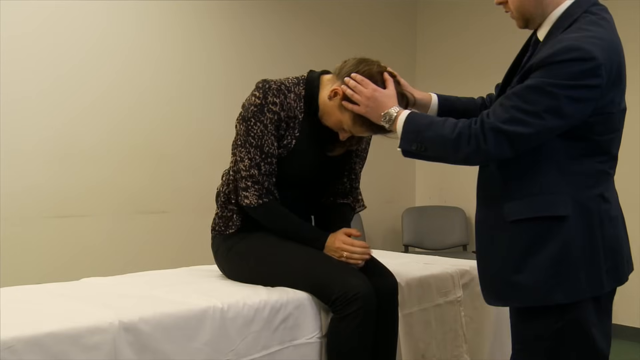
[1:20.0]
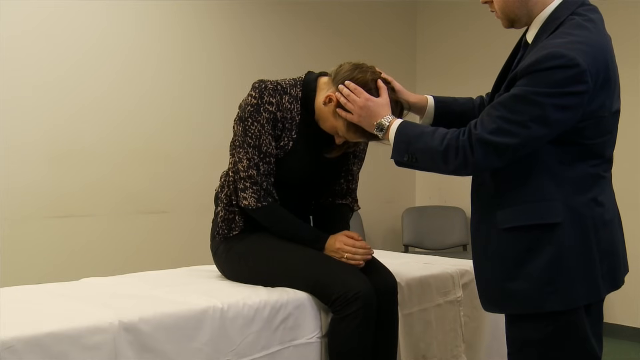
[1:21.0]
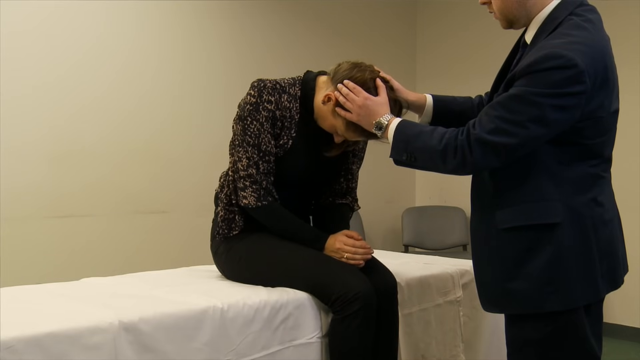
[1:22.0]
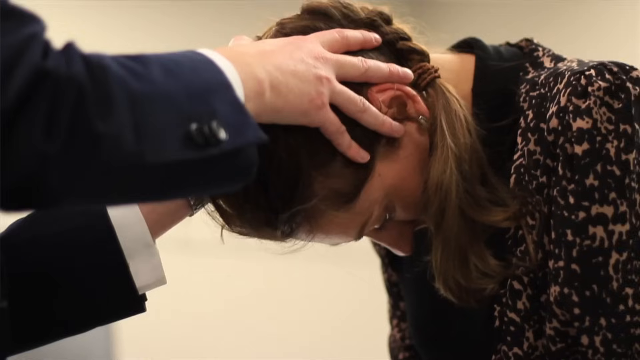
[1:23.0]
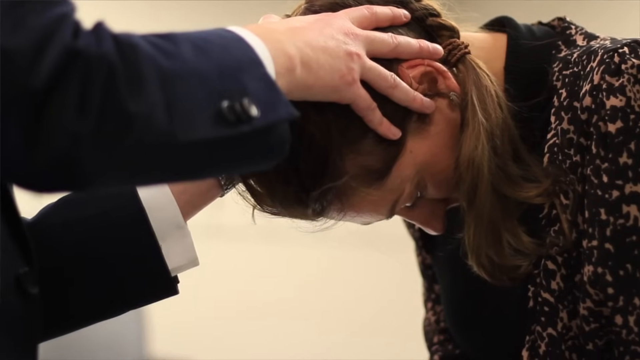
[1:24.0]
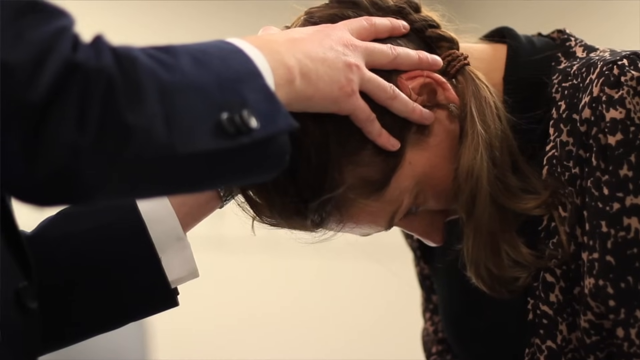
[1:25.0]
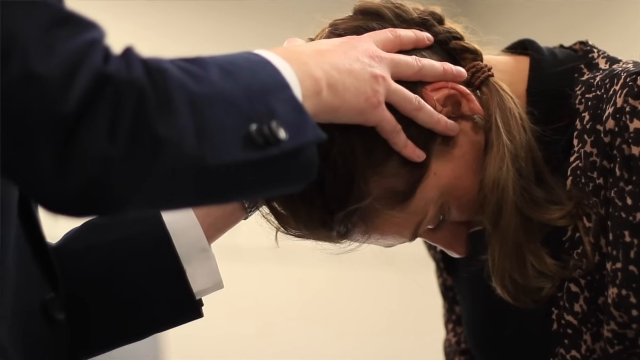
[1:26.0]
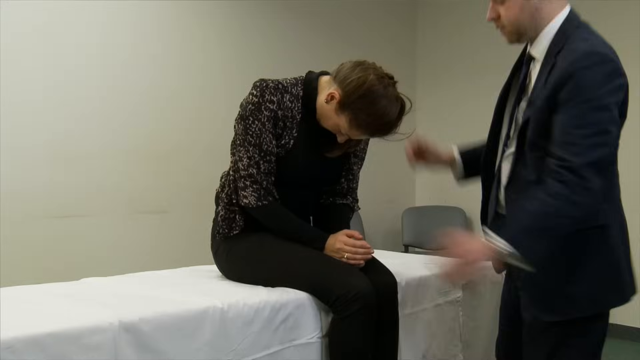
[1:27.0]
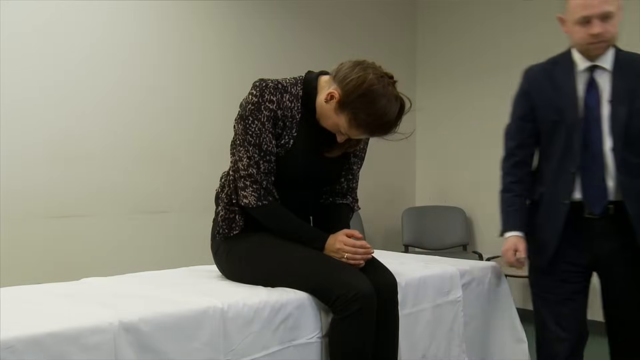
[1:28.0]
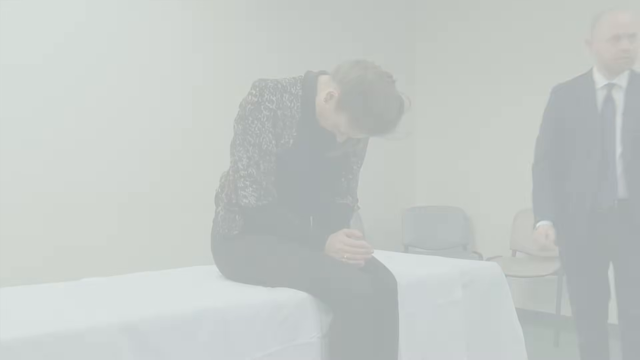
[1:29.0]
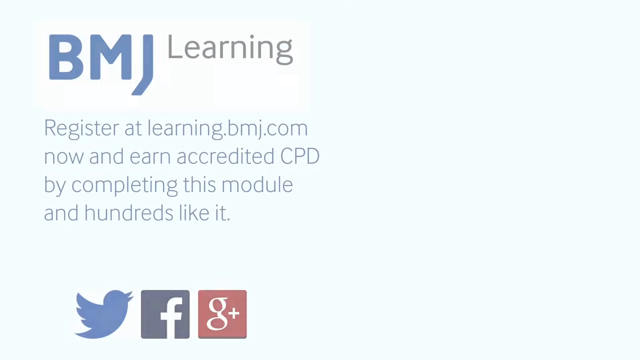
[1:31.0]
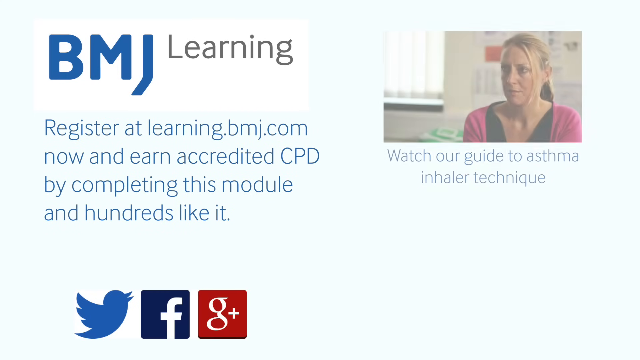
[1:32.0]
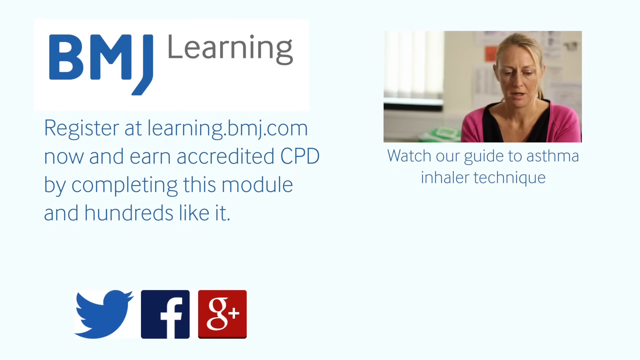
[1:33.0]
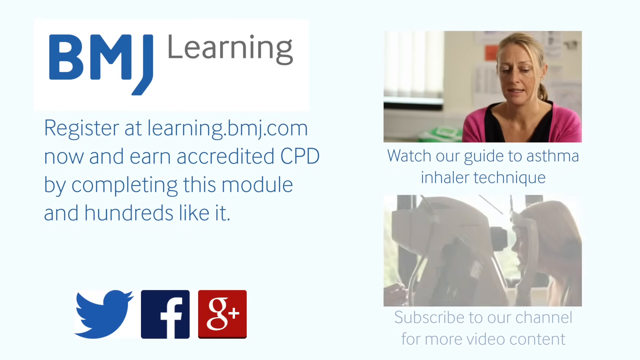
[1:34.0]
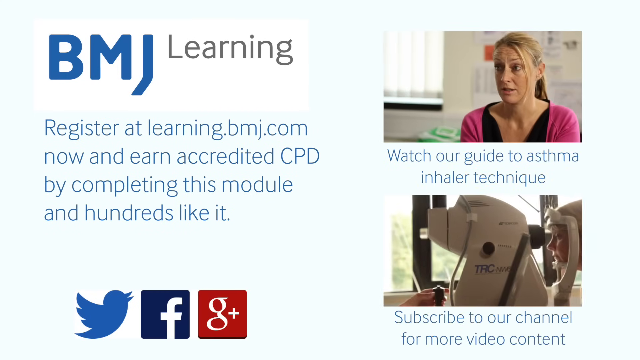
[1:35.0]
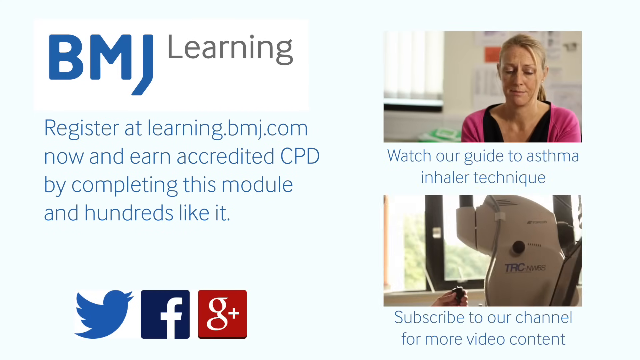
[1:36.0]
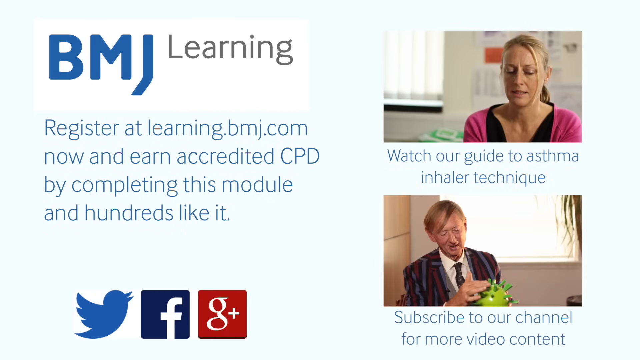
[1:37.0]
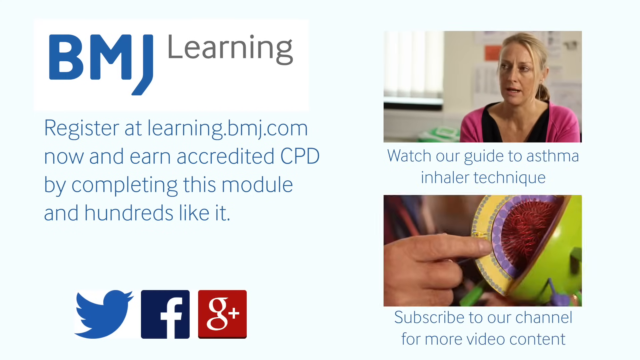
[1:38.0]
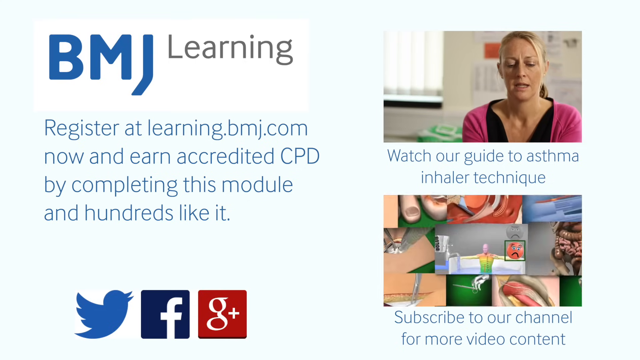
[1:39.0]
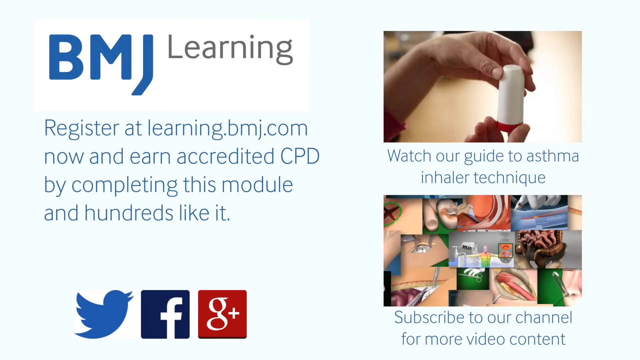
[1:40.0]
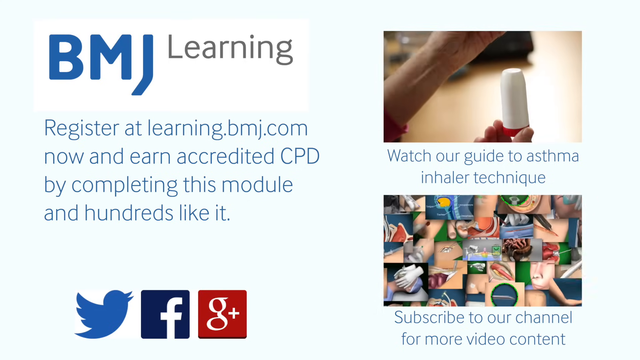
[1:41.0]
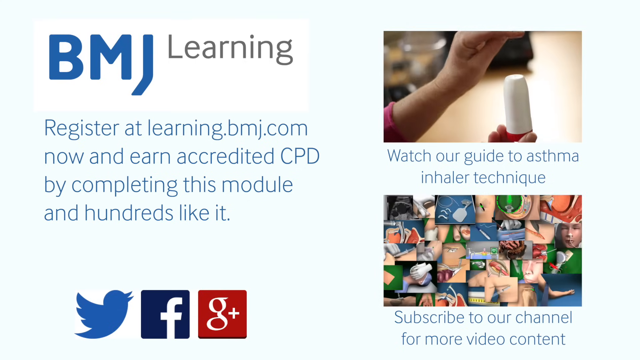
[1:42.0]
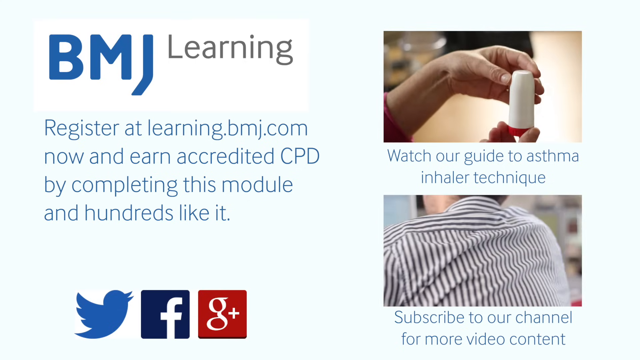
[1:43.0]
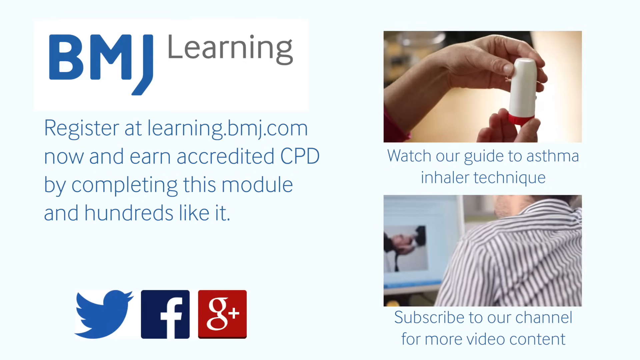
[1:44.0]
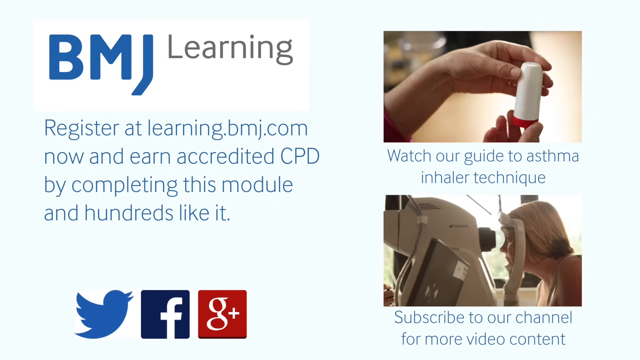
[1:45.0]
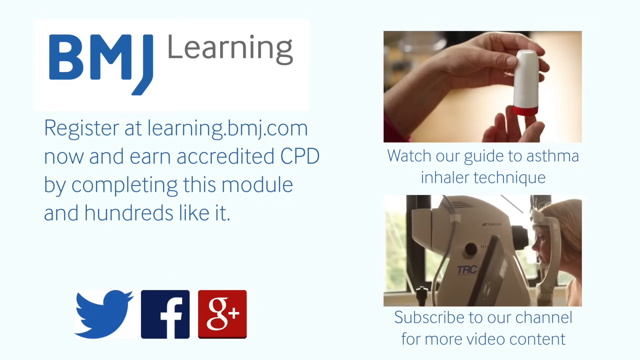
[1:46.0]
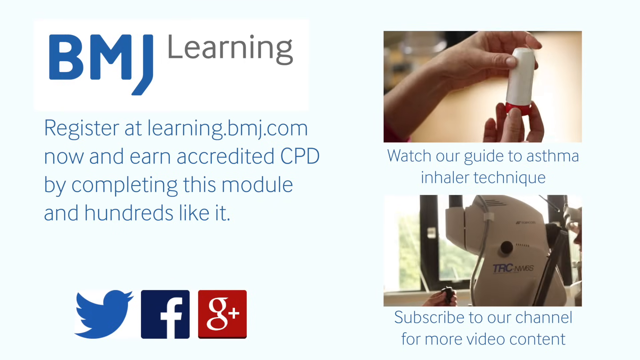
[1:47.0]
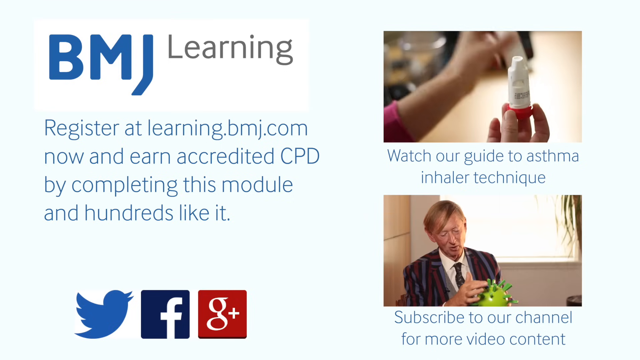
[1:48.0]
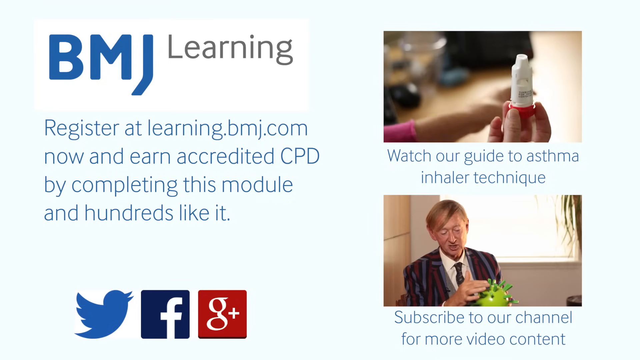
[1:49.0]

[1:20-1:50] The doctor has moved to face the woman, with his left hand and right hand on her head. She sits on the patient table with both legs off the side facing the doctor, hunched a little forward, hands in her lap, looking directly down. The doctor moves her head a little but keeps it down, then steps back from her. The video then goes to a screen that says "BMJ Learning". A small camera screen to the side shows a woman with blondish hair pulled back, wearing a pink cardigan over a black shirt; she looks like she is in an office. There are Twitter, Facebook and Google Plus icons, and text says "register at learning and earn an accredited CPD by completing this module".